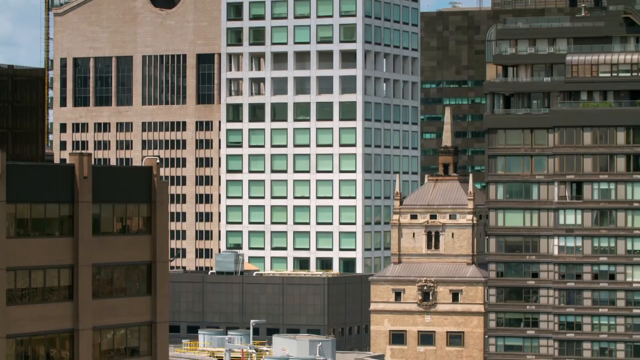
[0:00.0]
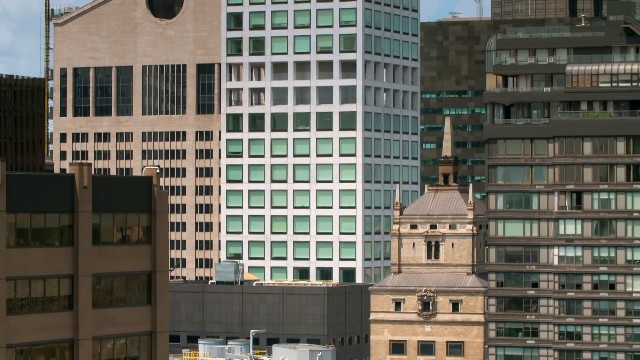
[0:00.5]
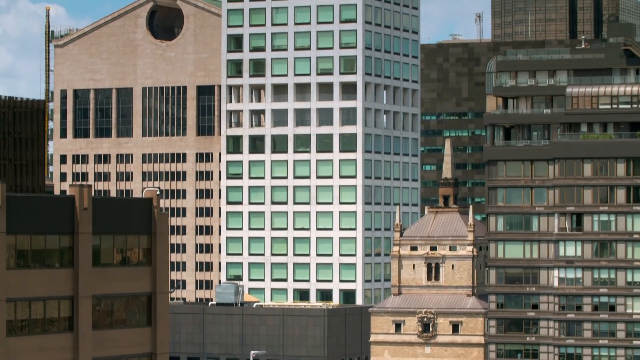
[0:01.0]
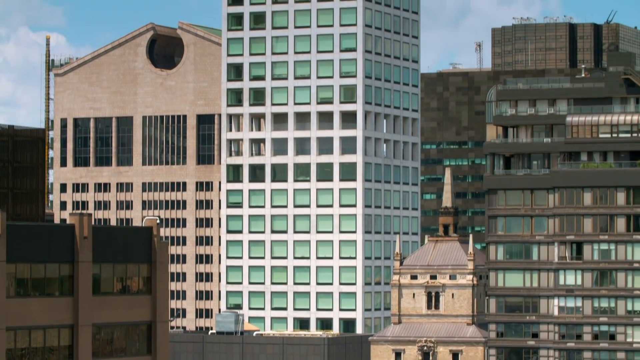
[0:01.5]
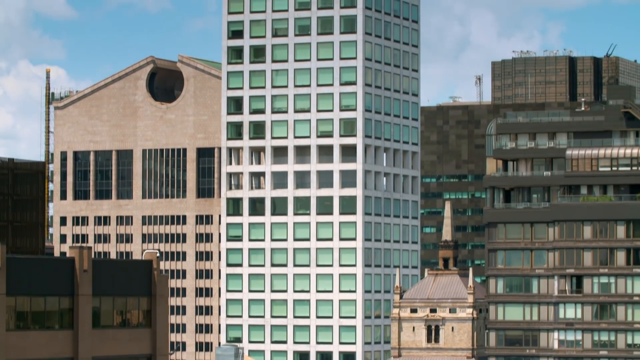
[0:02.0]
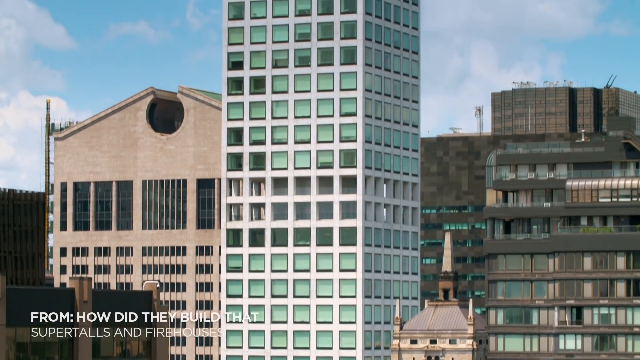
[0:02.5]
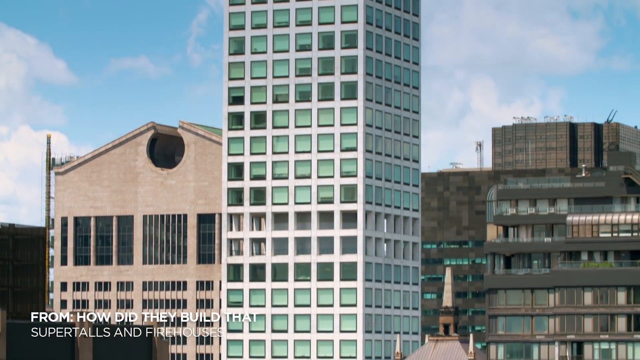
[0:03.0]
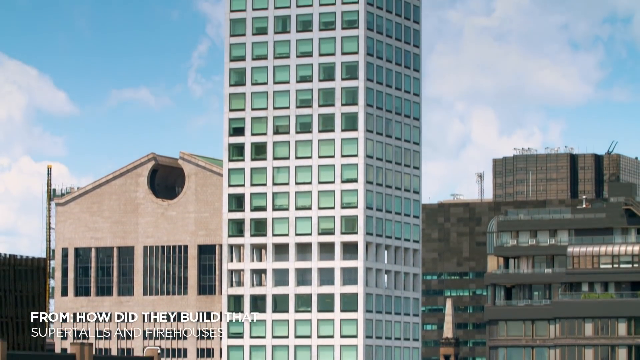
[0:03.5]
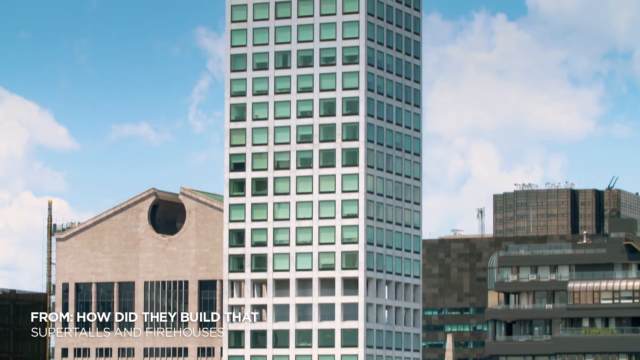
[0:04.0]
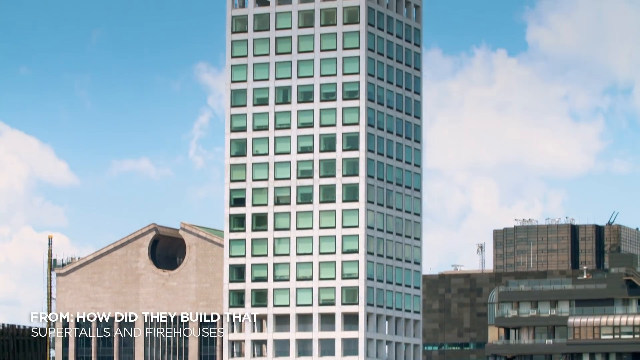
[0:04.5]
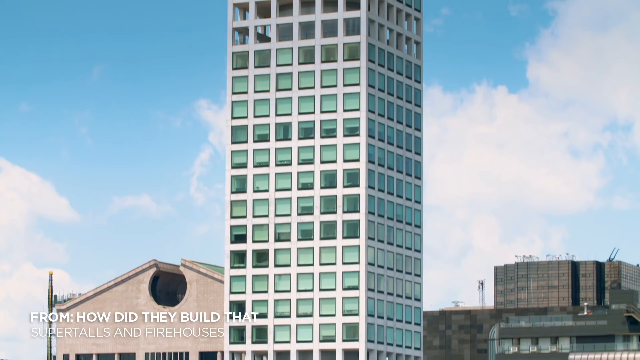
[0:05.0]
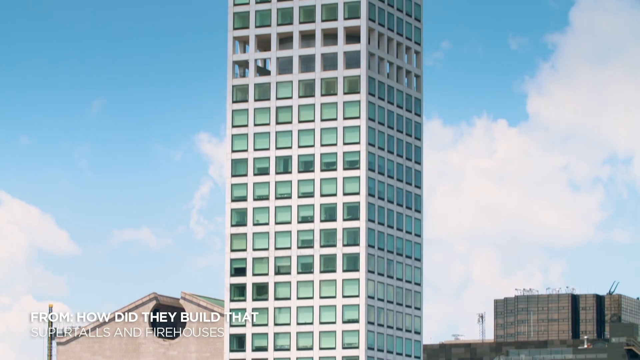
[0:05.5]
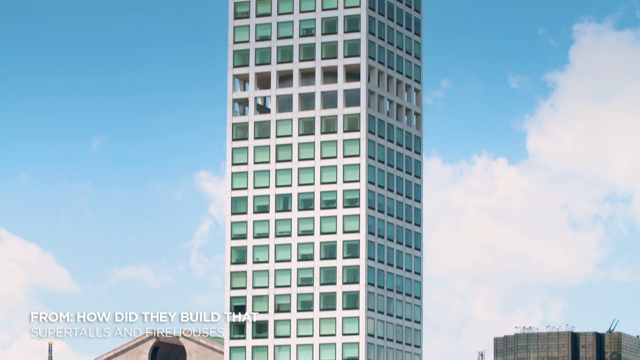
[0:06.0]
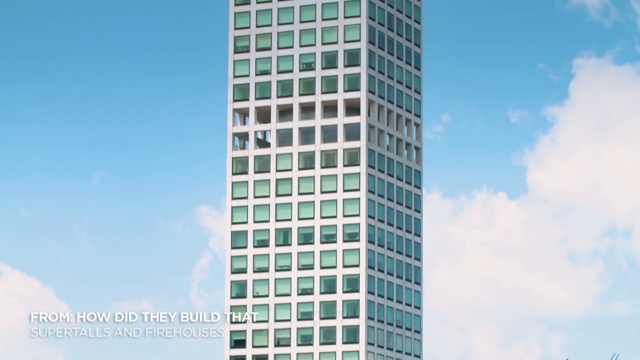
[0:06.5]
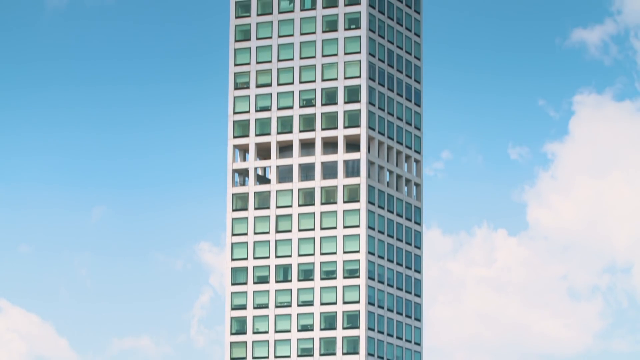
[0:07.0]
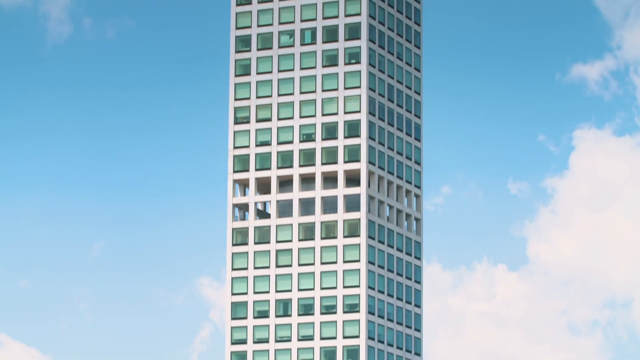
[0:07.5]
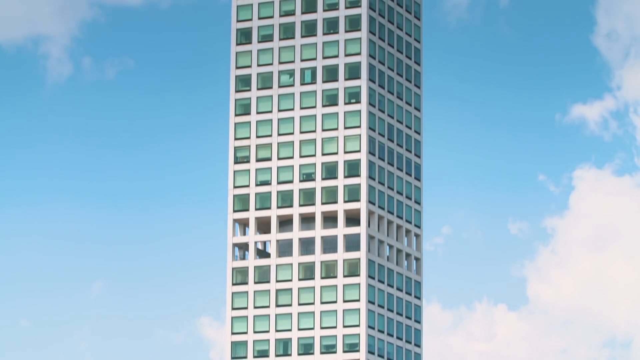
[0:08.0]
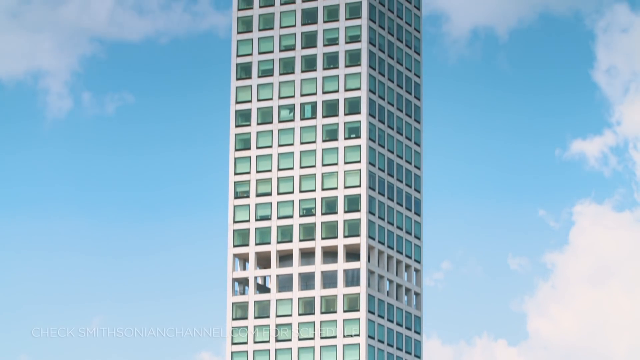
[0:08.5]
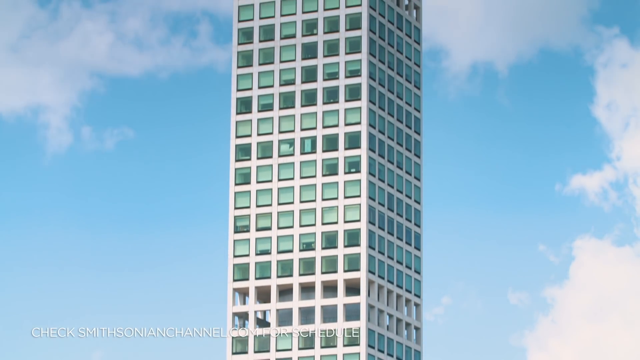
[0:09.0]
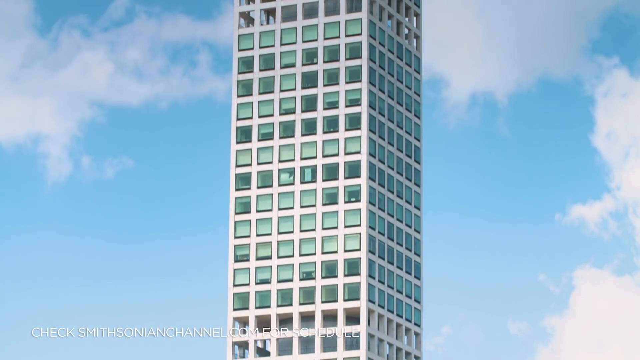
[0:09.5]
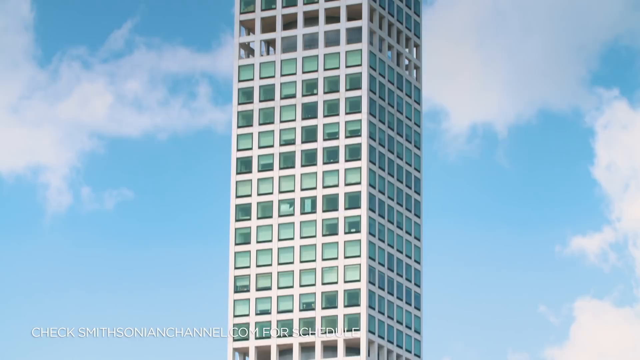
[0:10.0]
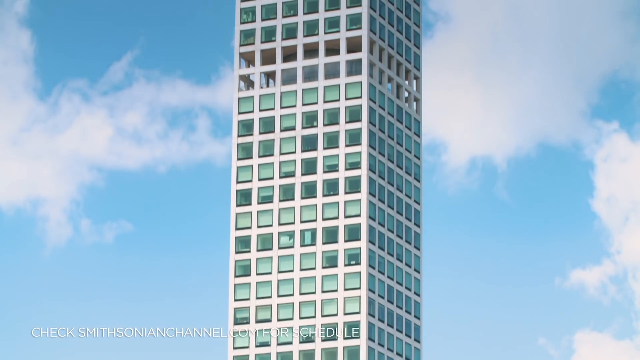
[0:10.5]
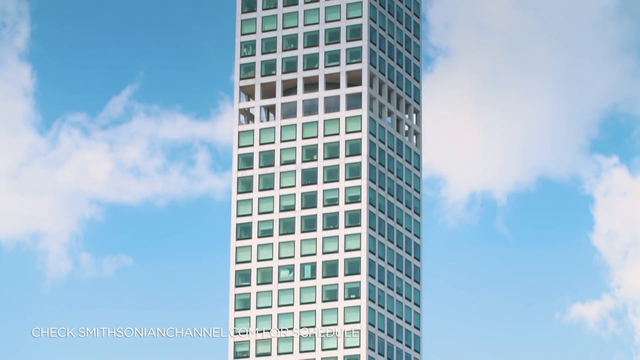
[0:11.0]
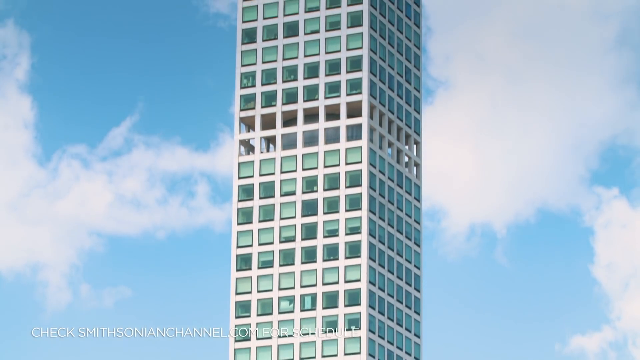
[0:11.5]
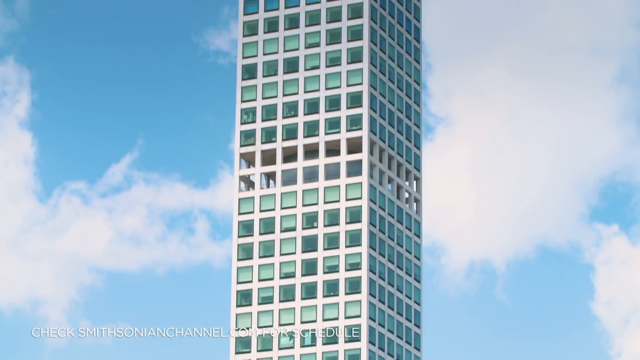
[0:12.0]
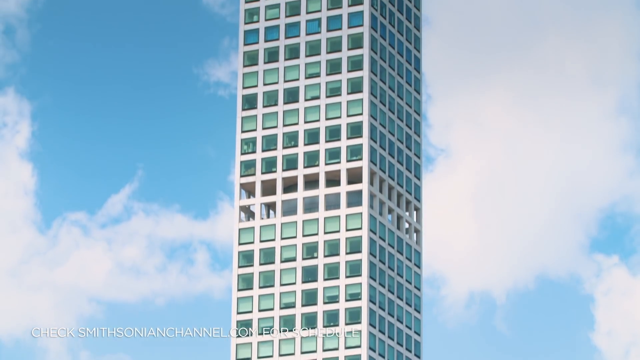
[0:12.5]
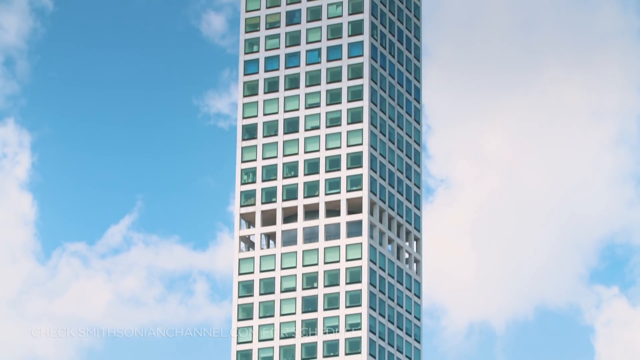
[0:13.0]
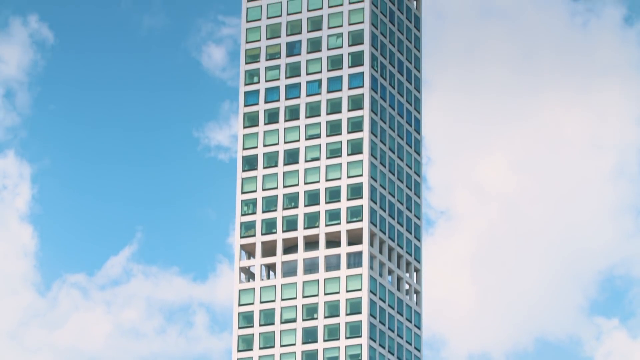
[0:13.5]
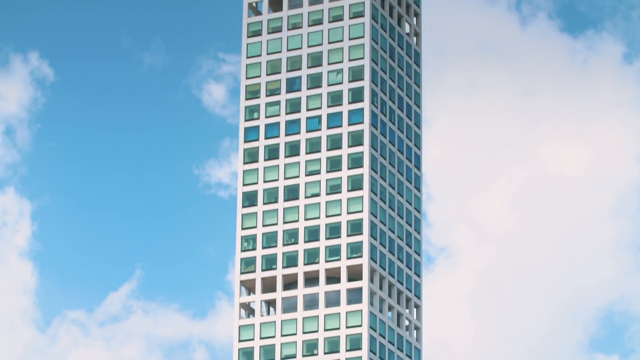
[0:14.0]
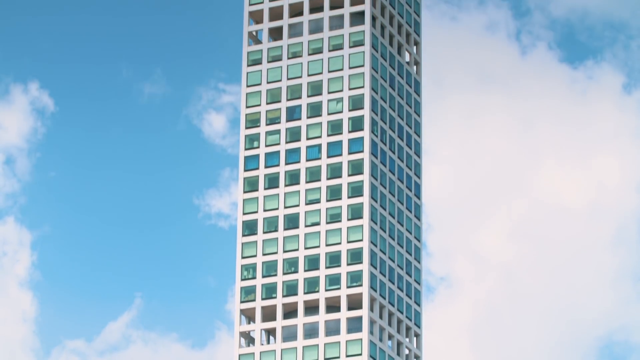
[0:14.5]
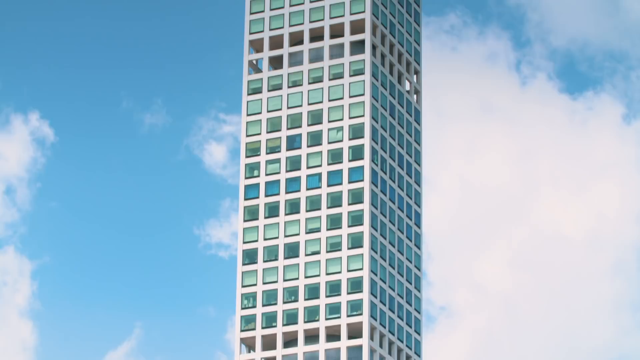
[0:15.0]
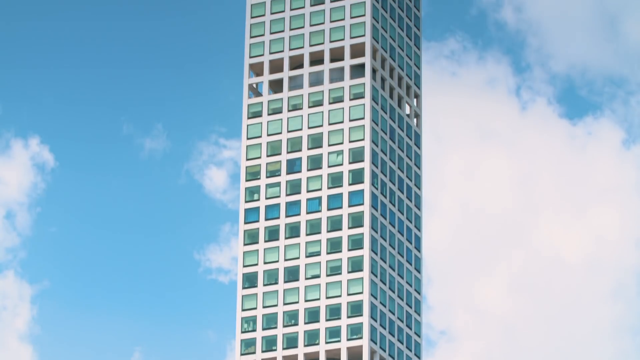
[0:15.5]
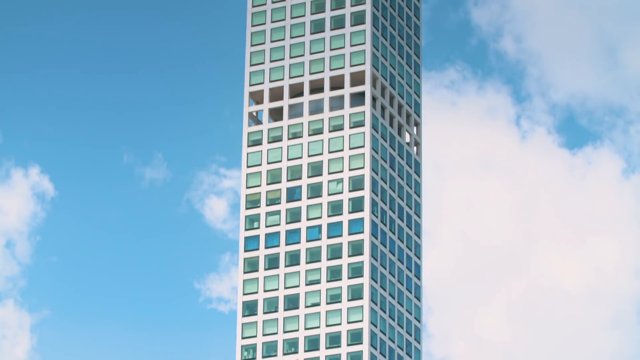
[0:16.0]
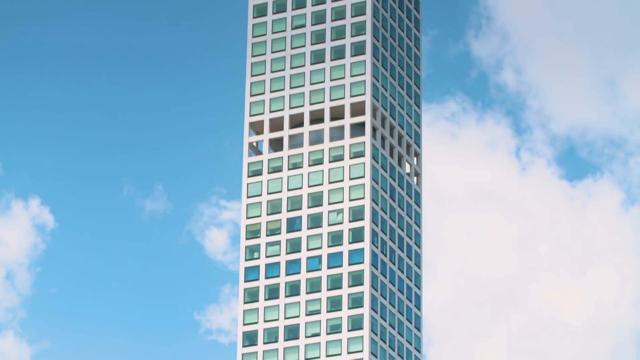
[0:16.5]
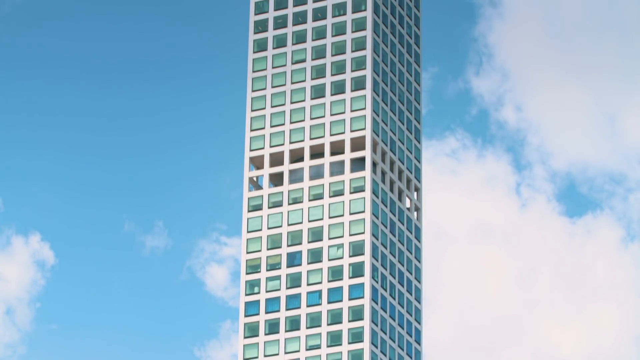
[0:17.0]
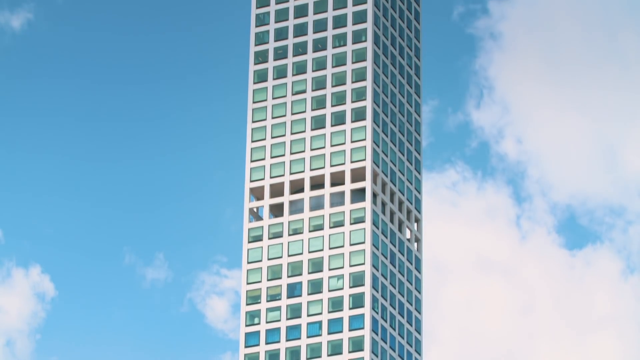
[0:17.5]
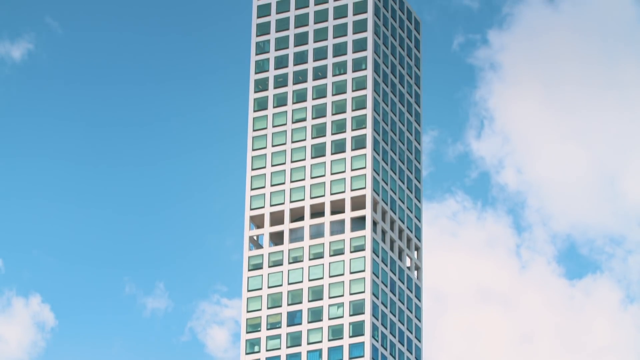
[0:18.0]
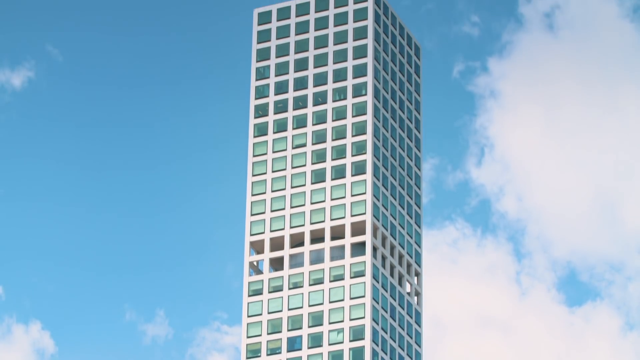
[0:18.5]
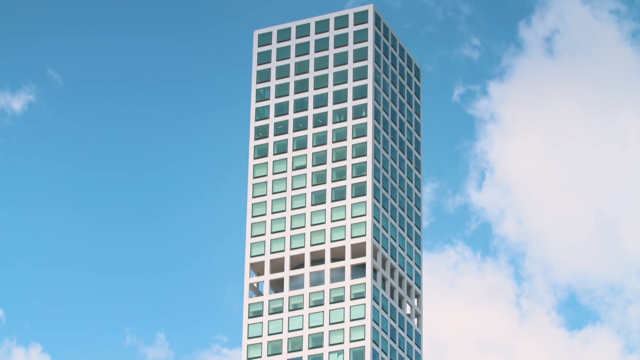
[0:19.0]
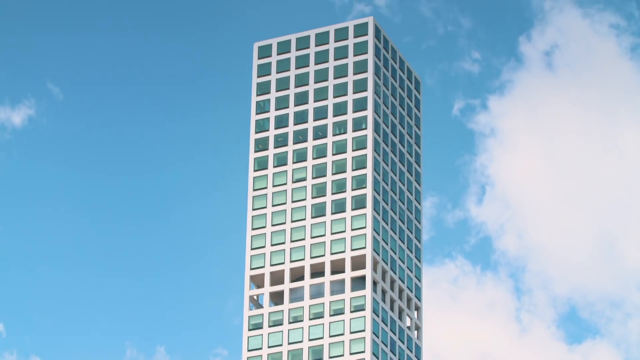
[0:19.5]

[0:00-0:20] The camera pans up into city buildings and focuses on a very tall skyscraper with many square windows. Some of the windows appear to be missing or to be a different color. Most look slightly tinted green, while some appear much more translucent, either pure glass or almost as if they are not there. Behind the skyscraper the sky is blue with wispy and puffy white clouds; it is a very sunny day, although the sun is not visible. There are no markings or words on the building, and it is not possible to tell whether it is commercial or residential. It is much taller than all of the surrounding buildings.